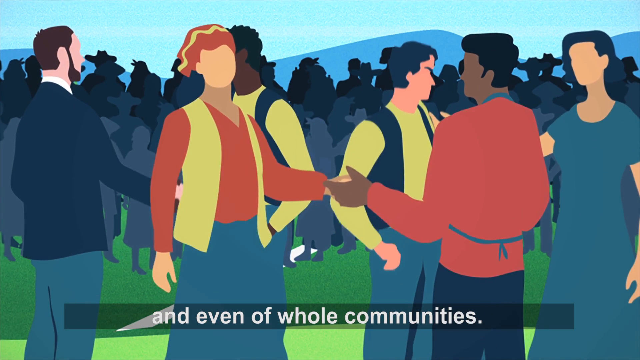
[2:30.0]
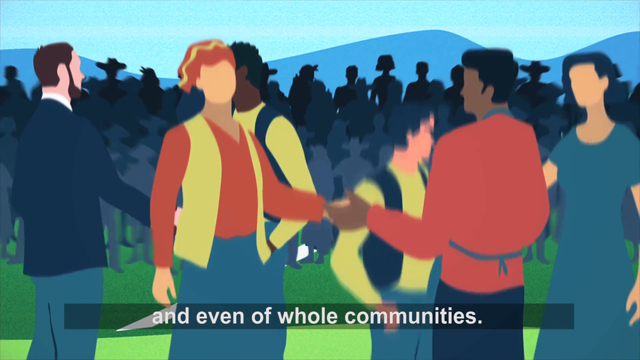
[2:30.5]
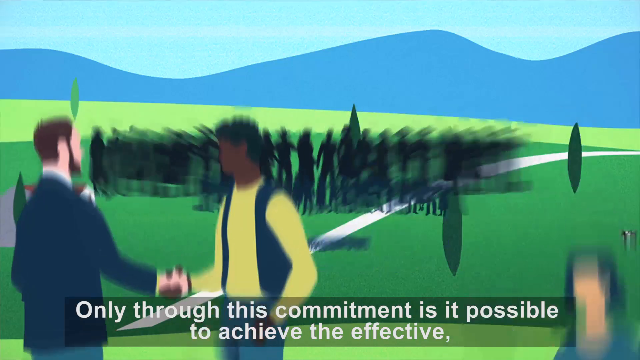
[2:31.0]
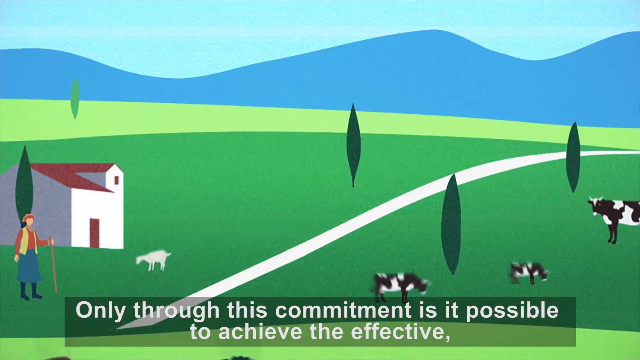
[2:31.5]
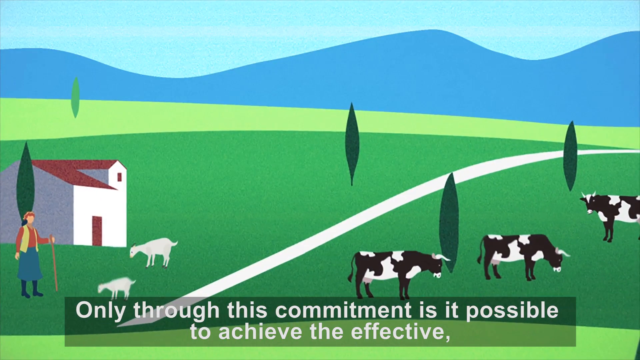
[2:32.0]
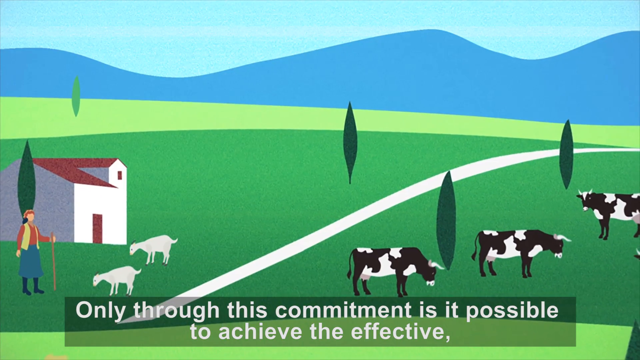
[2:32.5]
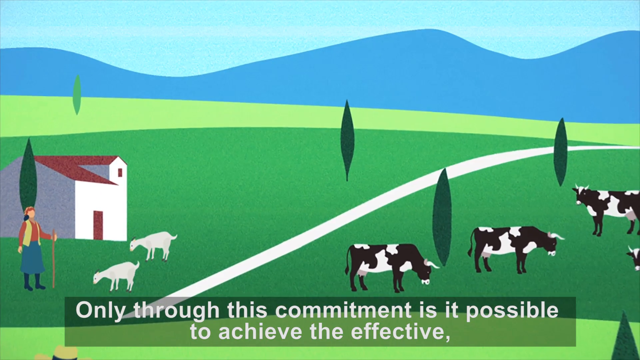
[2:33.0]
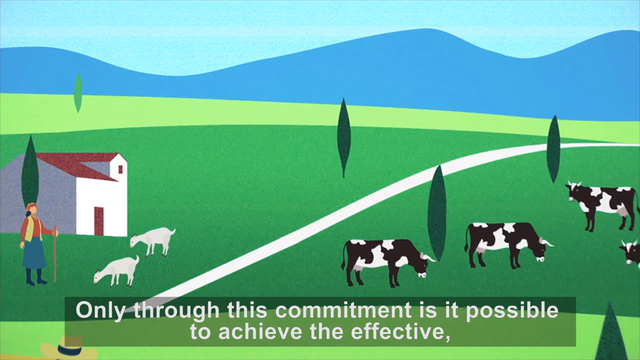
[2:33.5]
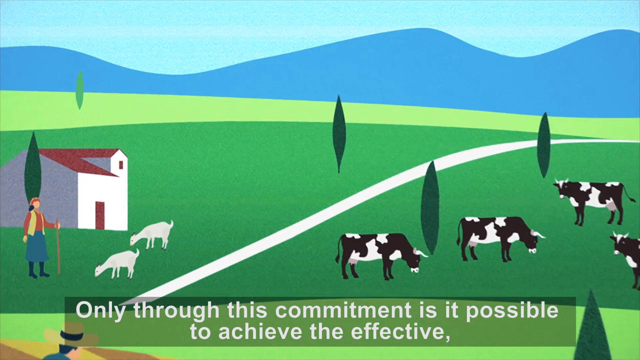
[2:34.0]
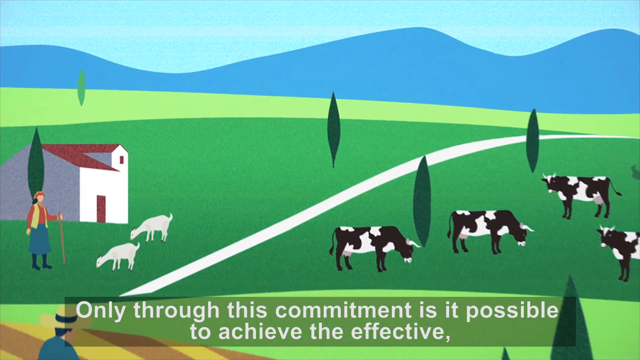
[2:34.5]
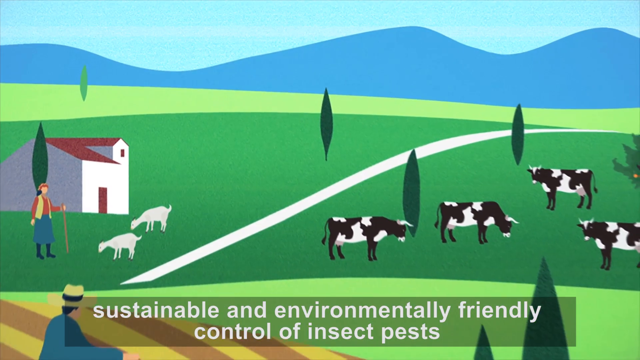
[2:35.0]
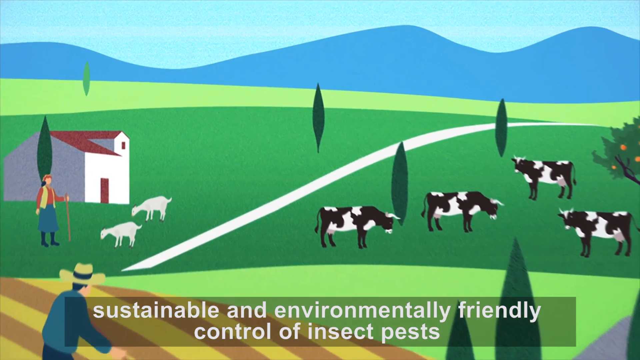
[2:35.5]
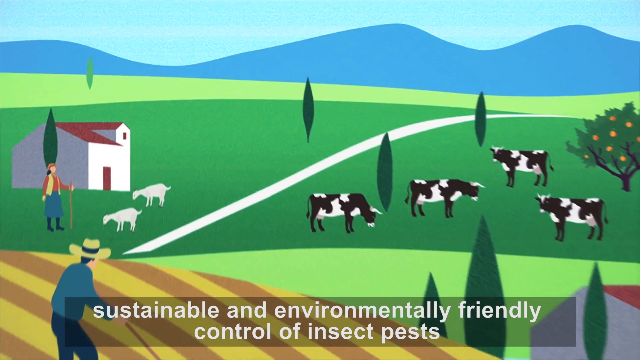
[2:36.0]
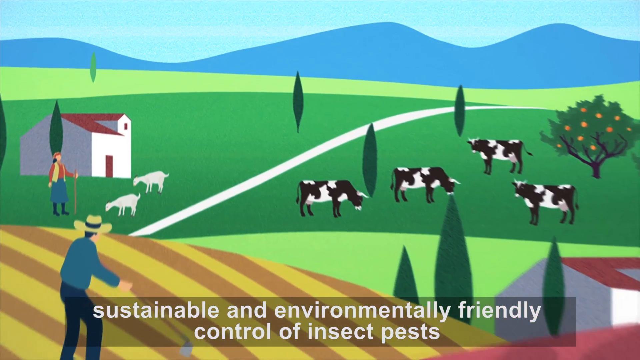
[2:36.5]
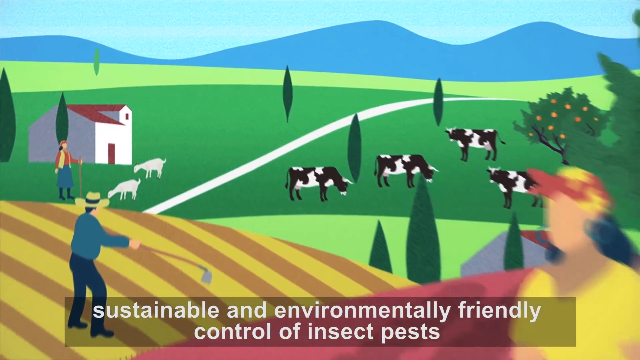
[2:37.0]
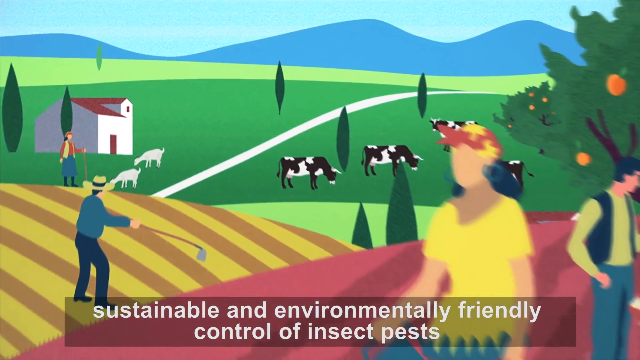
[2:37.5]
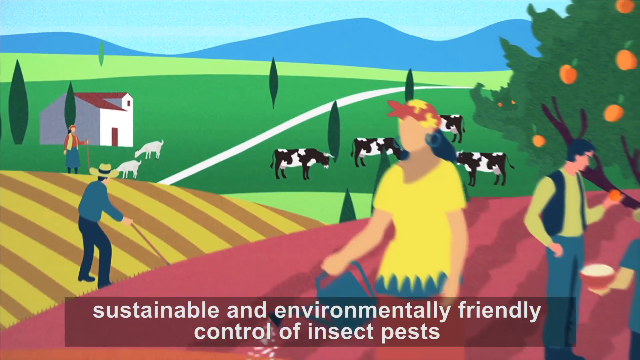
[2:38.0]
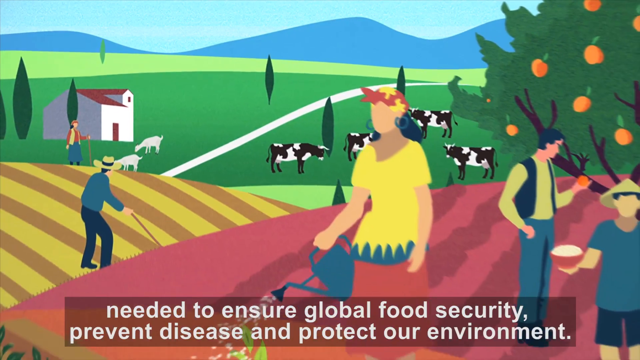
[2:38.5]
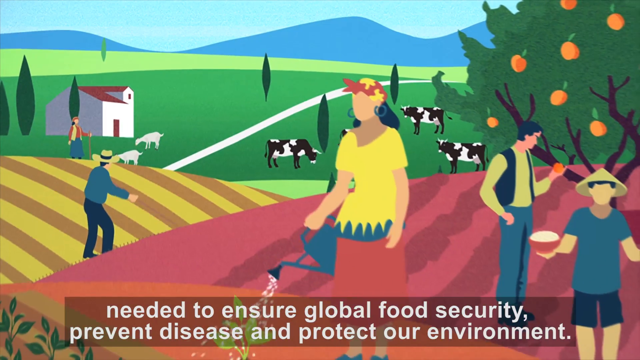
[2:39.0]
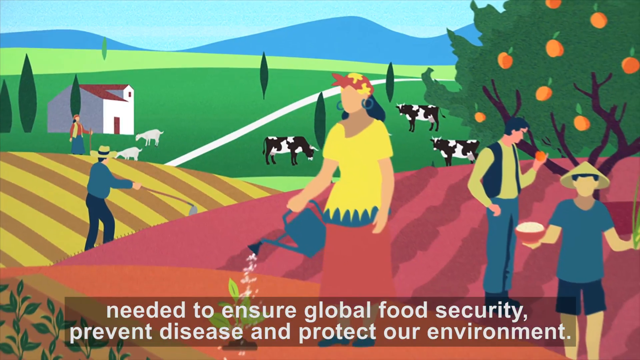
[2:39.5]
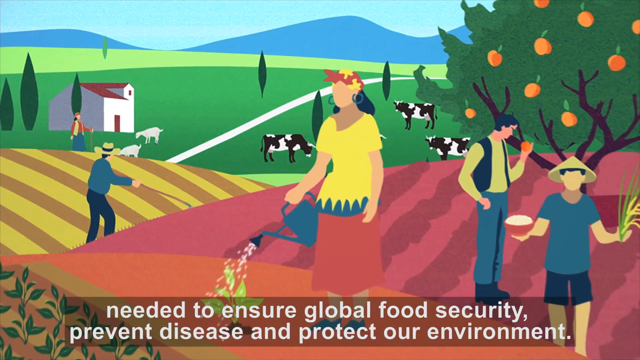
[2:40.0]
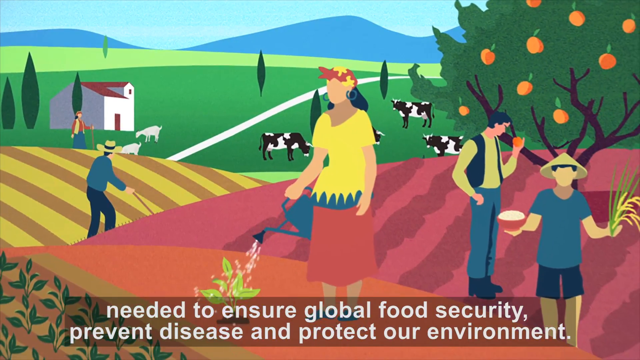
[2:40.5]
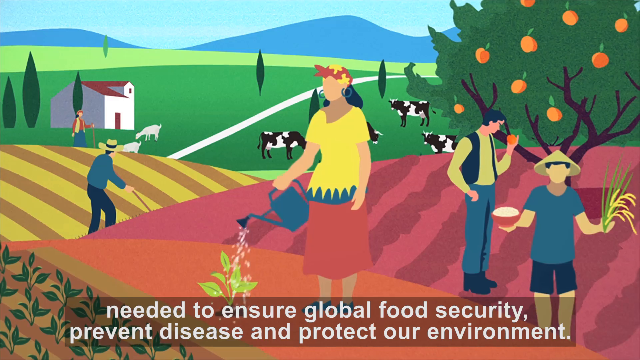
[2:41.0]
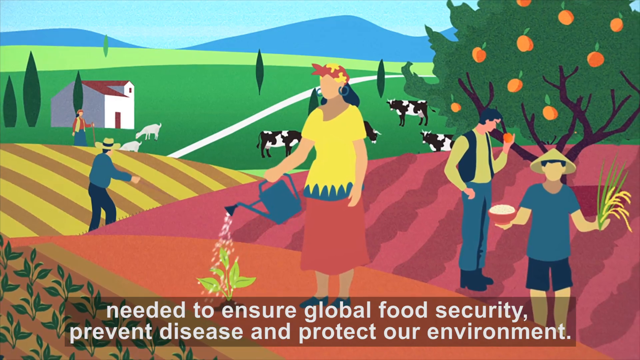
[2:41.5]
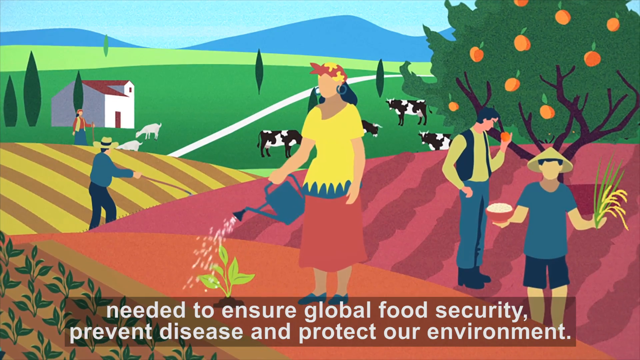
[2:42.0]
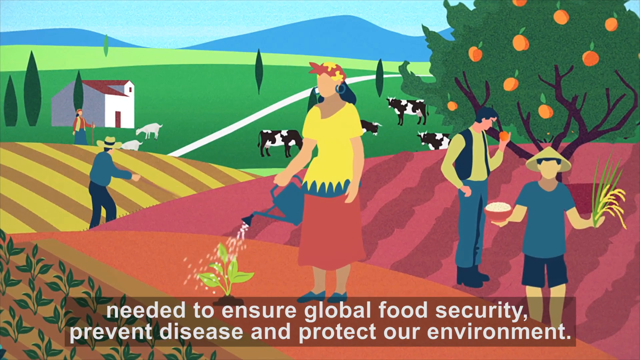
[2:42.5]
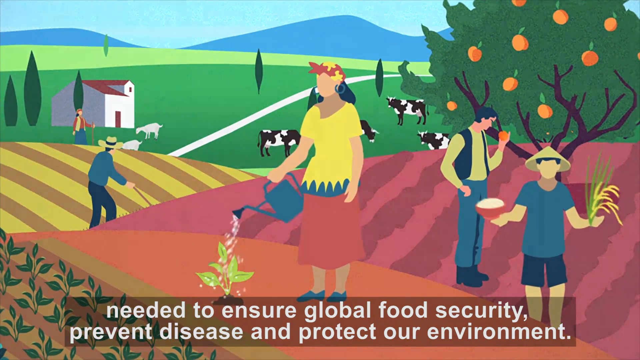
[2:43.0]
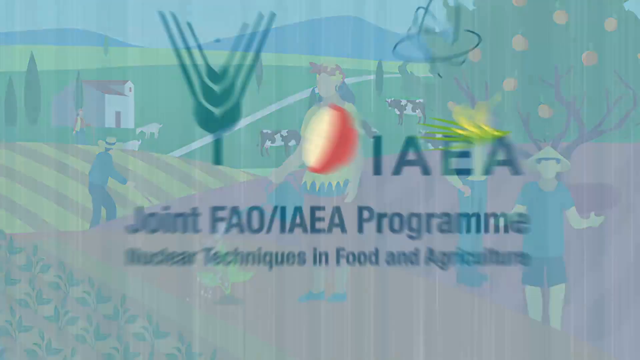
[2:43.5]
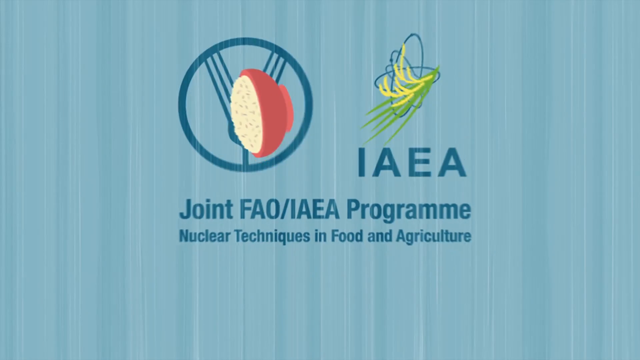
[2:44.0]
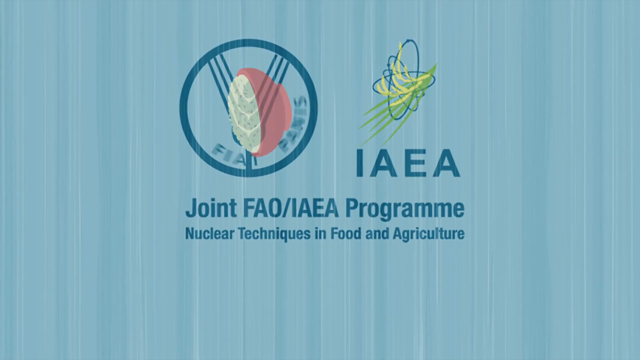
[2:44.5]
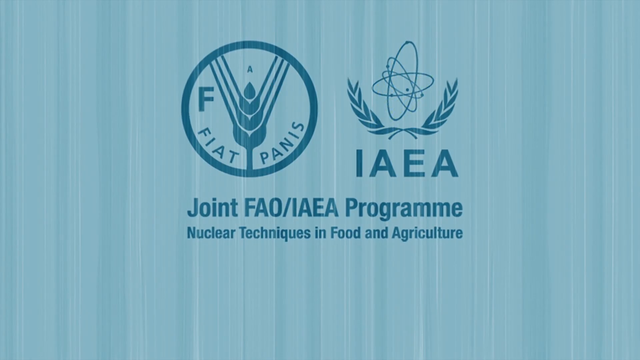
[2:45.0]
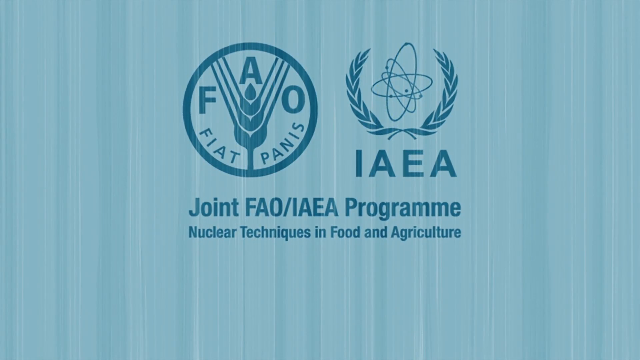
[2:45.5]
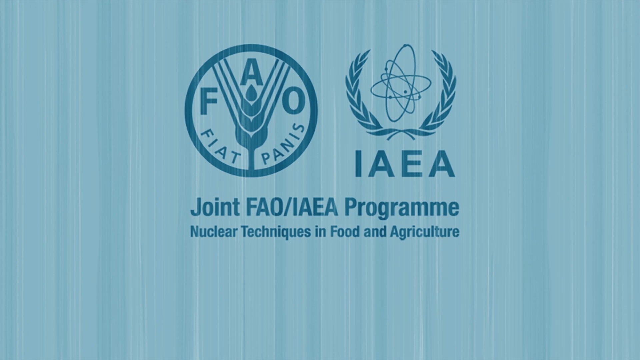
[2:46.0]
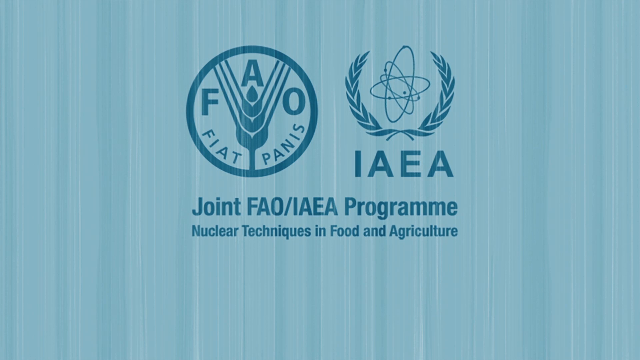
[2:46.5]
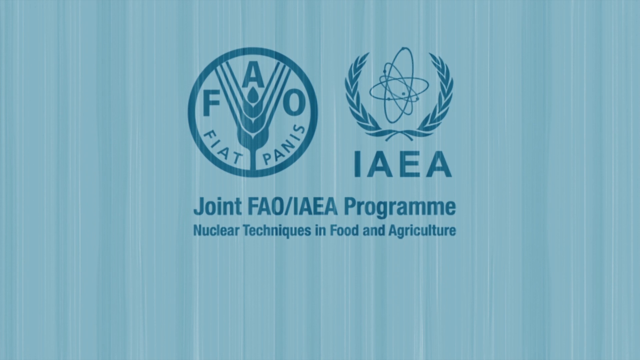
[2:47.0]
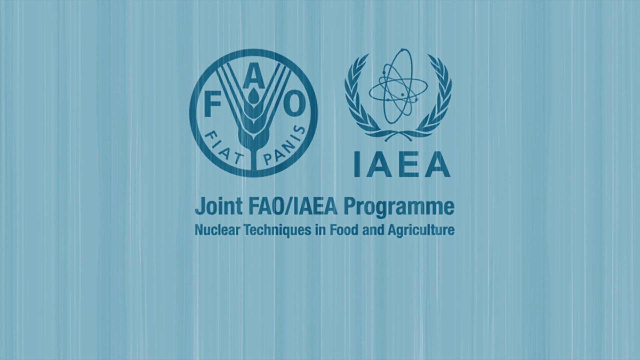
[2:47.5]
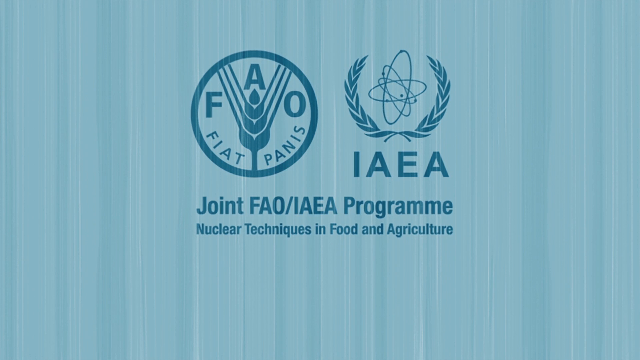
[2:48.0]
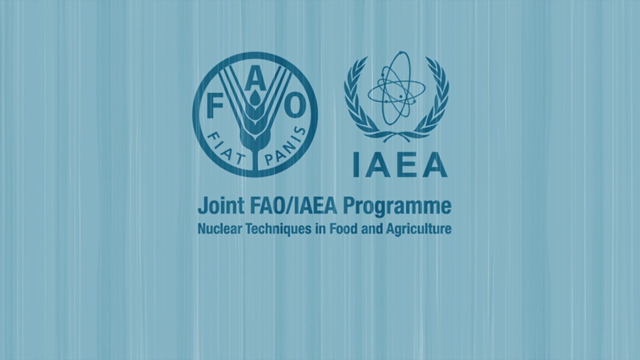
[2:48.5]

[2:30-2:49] The view pans out back to the healthy ecosystem scene. A white farmhouse is at the back left, and in front of it stands a goat herder wearing a yellow waistcoat with a band in her hair, with two goats in front of her. Four cows are on the other side of the field, surrounded by fruit trees. As the view pans out further, a farmer tills by hand and other people work the land, including what looks like a man in a Vietnamese-style hat holding possibly rice plants. A woman in the foreground with a band in her hair waters her plants while a man inspects his orange trees. Finally the video cuts to a credit page referring to Fiat Panis and the International Atomic Energy Agency, apparently a joint collaboration between the two for what are called nuclear techniques in food and agriculture.